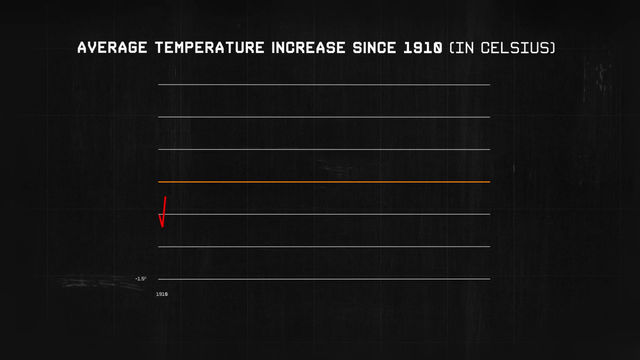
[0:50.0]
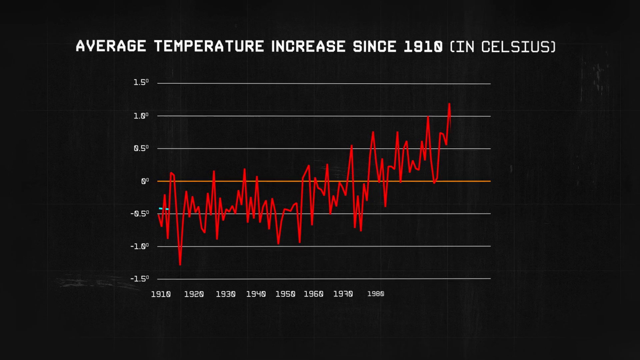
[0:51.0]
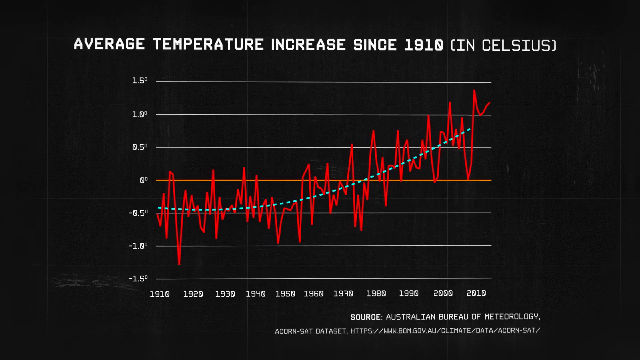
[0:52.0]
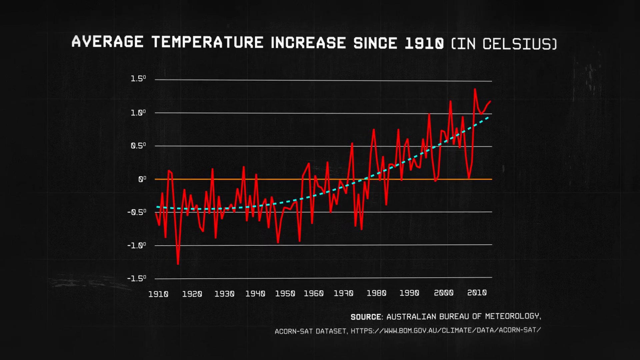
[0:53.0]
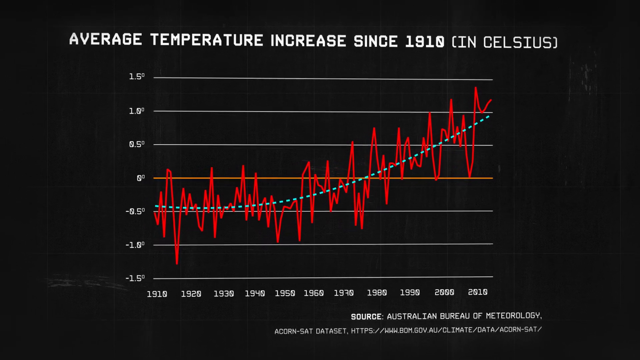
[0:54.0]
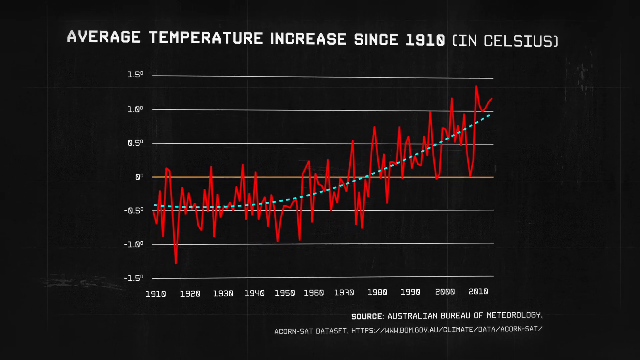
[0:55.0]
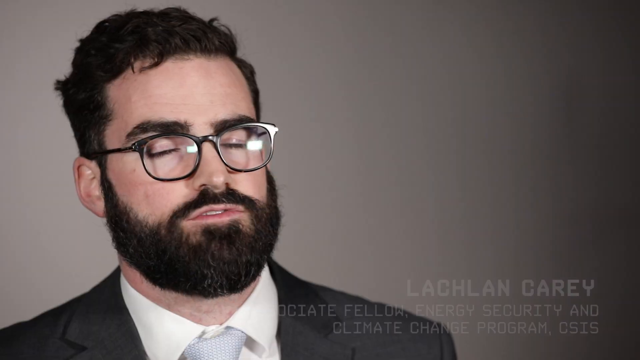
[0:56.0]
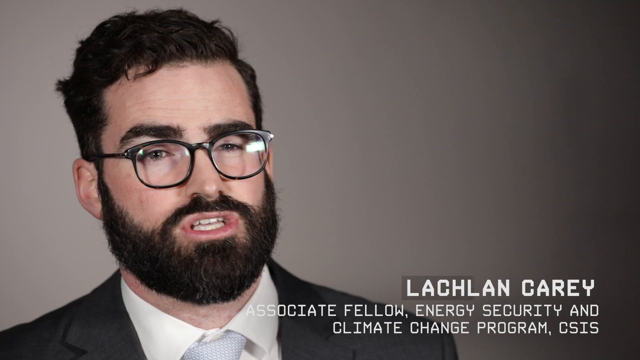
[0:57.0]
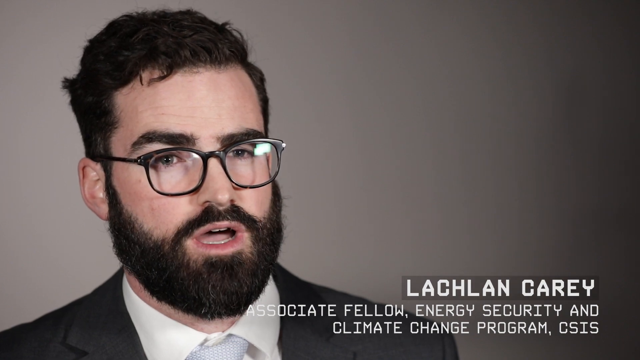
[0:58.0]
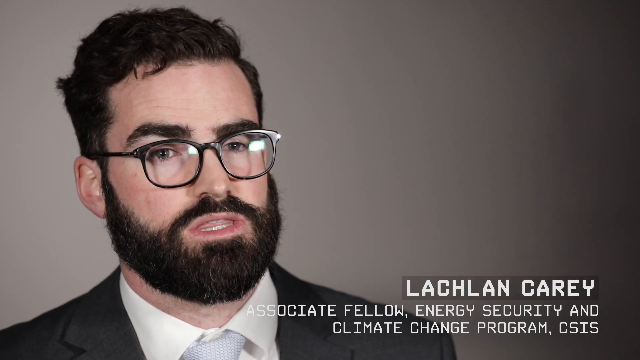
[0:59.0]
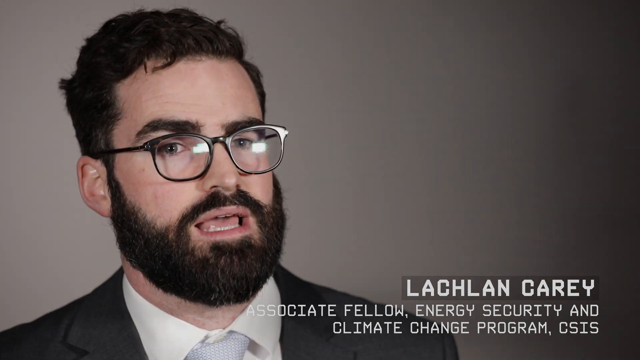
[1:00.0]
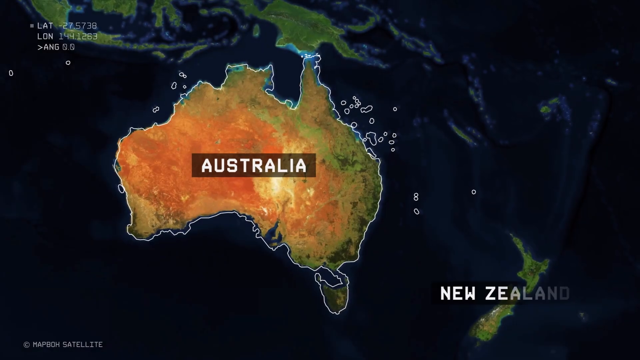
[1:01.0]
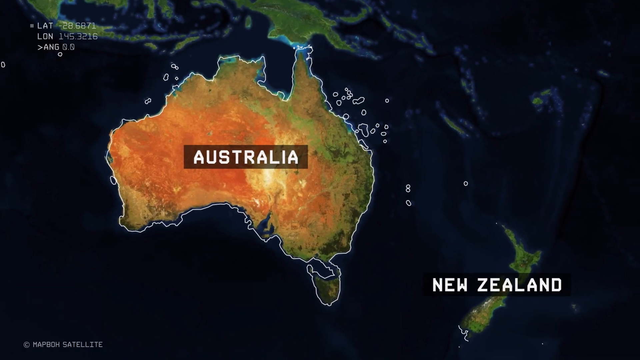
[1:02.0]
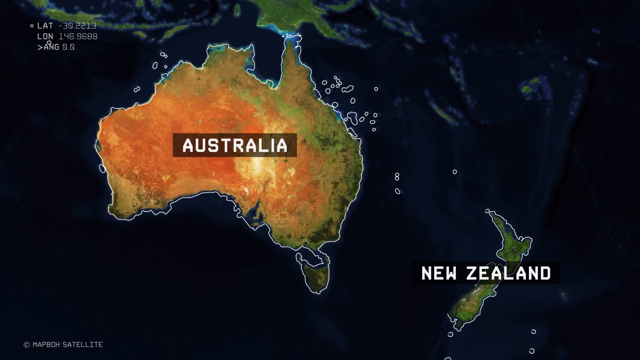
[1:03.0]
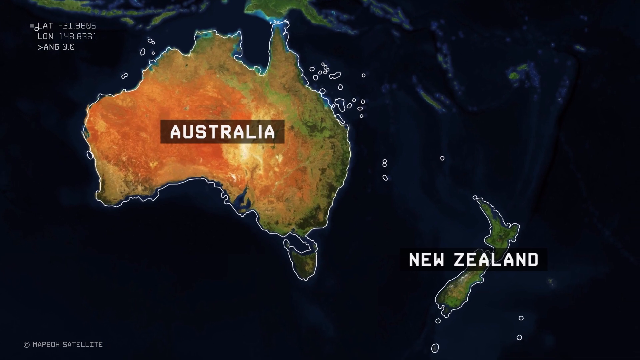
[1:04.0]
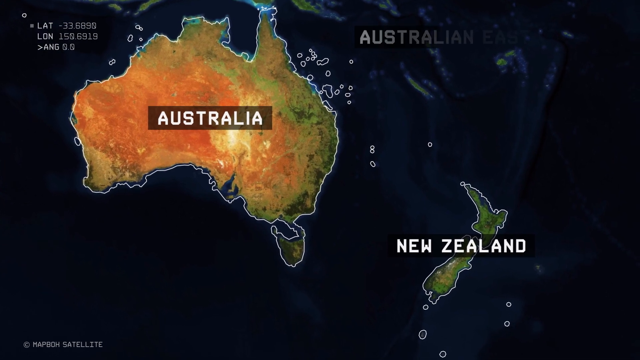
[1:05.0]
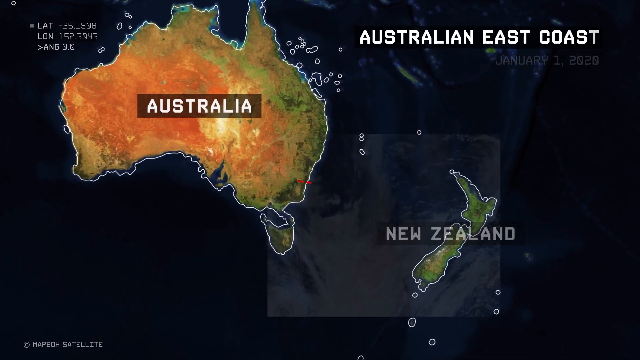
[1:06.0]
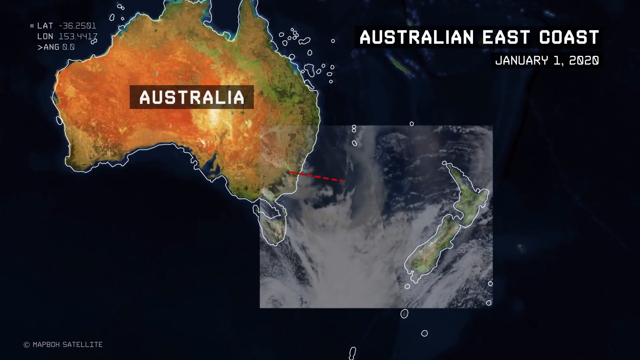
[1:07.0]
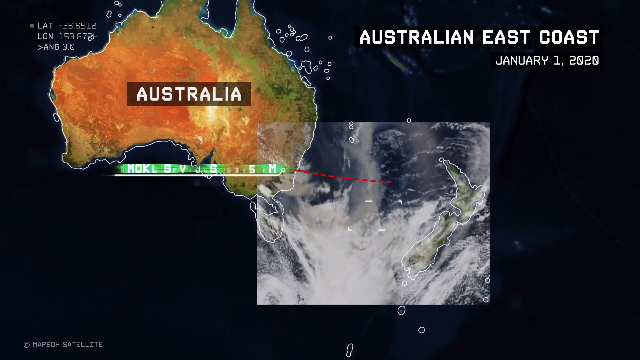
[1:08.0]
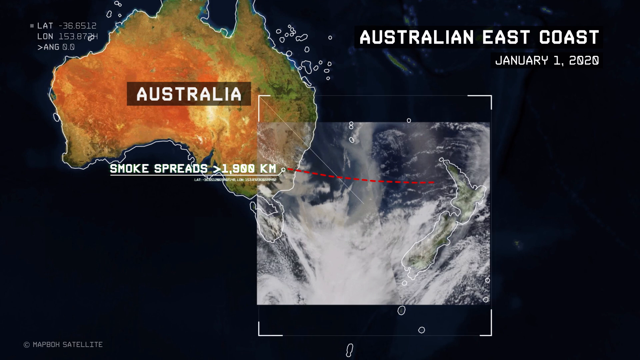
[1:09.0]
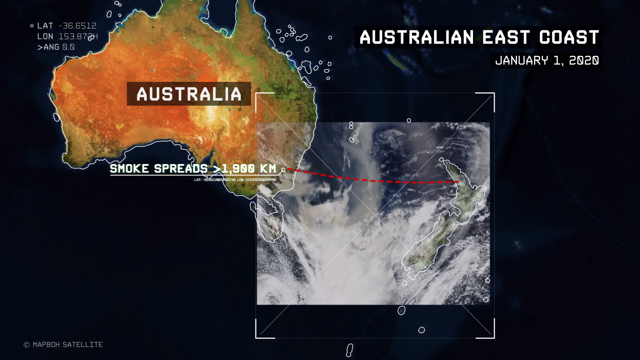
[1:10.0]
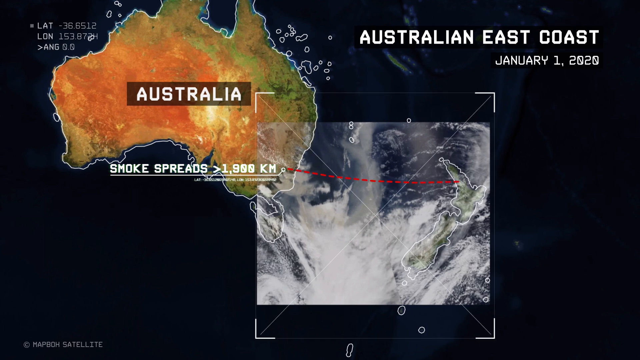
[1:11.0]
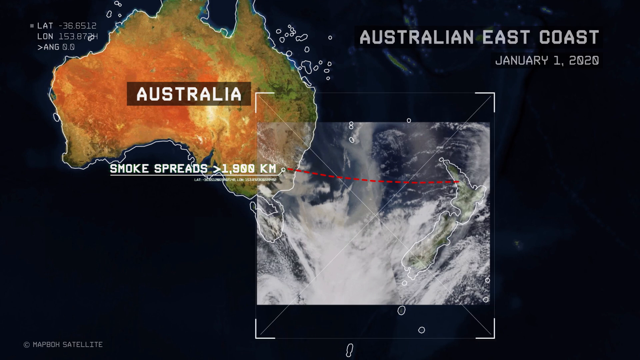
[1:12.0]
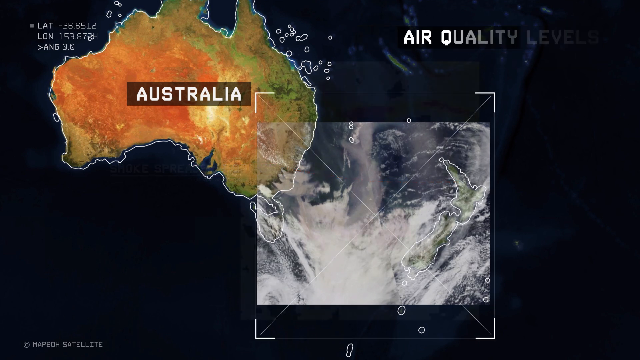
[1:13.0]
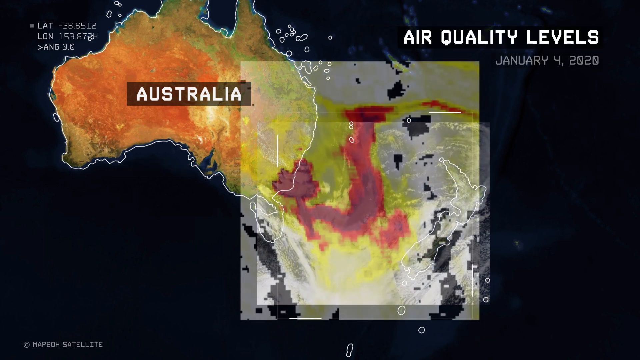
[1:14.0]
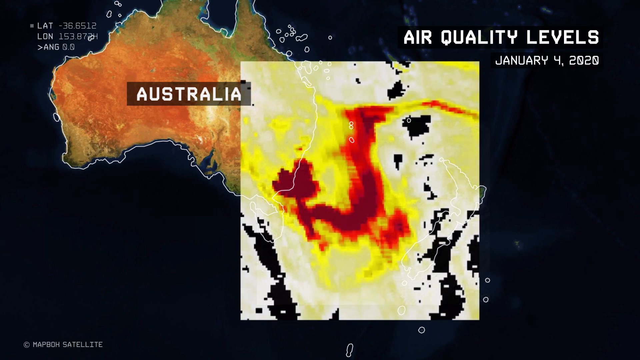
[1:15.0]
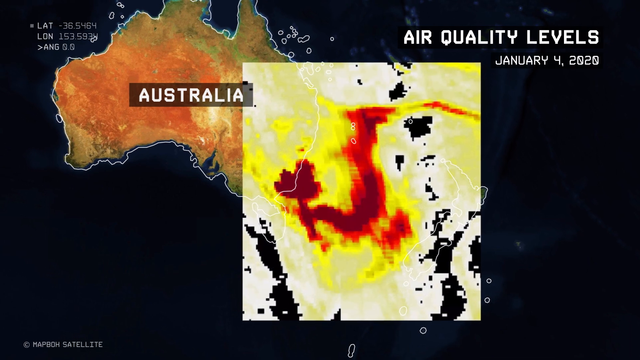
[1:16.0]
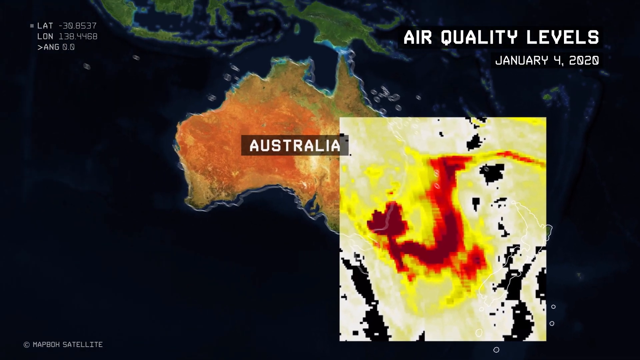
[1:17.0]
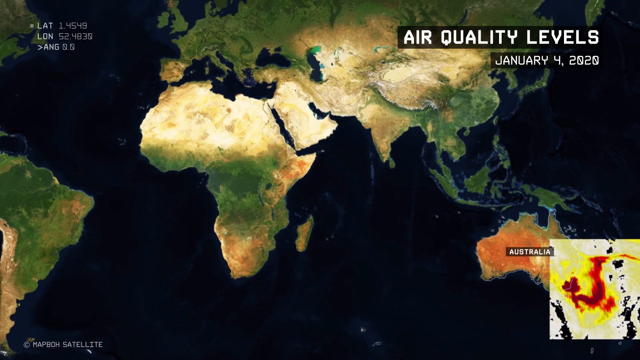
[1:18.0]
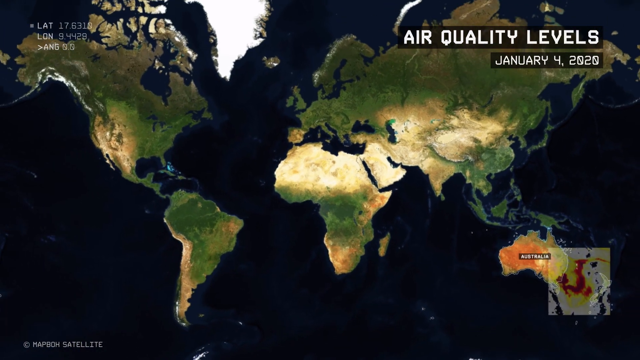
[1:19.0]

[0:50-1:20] The Australian east coast is shown, with Australia highlighted and then New Zealand. Text describes smoke spreading from Australia to New Zealand, covering about 1,900 kilometres. Areas and their air quality levels are marked on a map of the Australian continent, while the preceding map showed areas affected by fires. Finally, a chart about the average temperature increase in Celsius since 1910 appears.